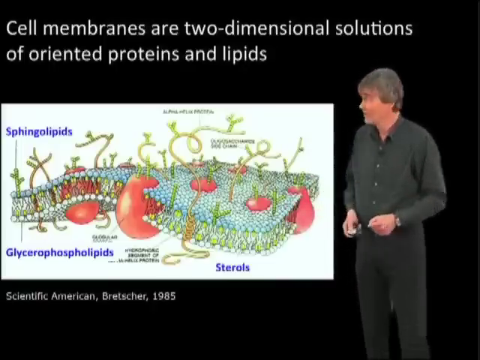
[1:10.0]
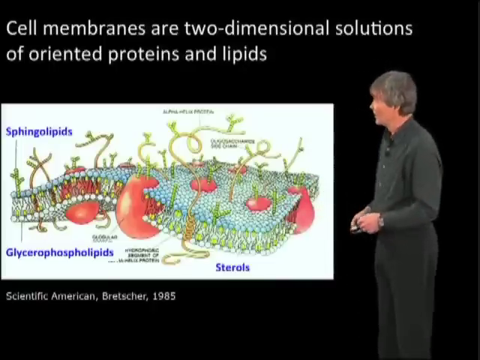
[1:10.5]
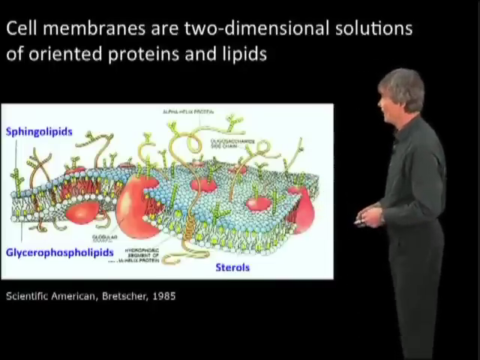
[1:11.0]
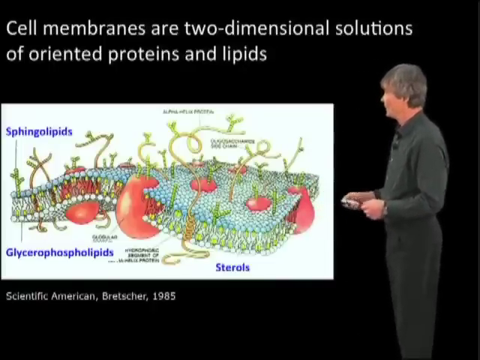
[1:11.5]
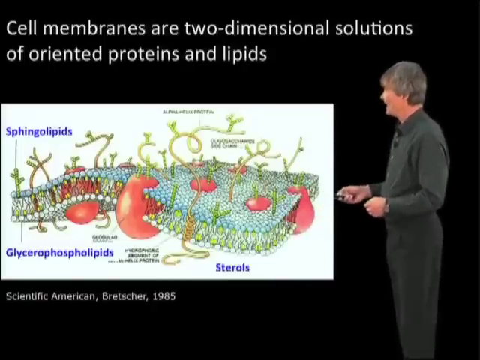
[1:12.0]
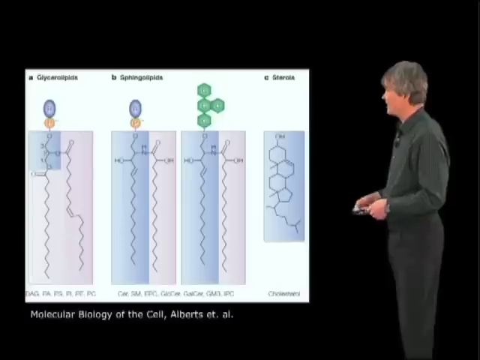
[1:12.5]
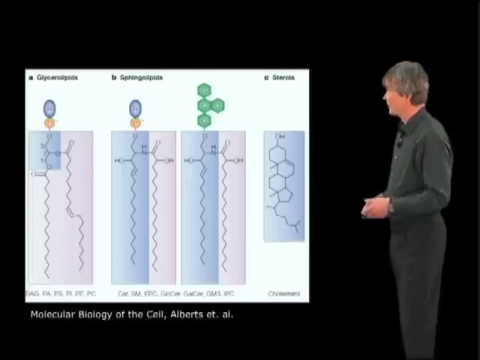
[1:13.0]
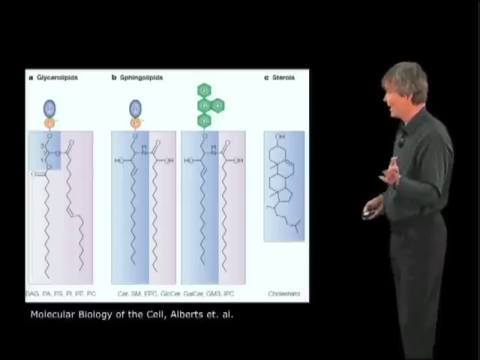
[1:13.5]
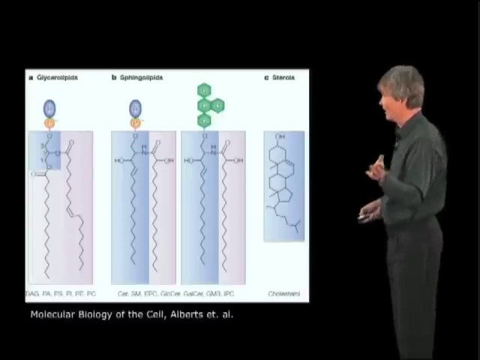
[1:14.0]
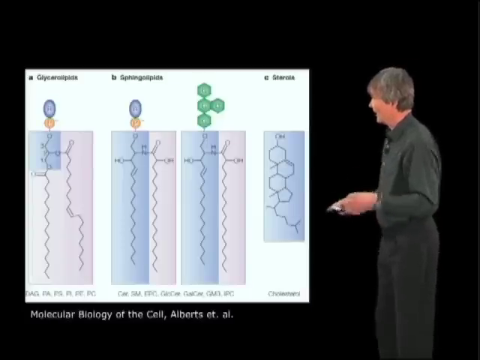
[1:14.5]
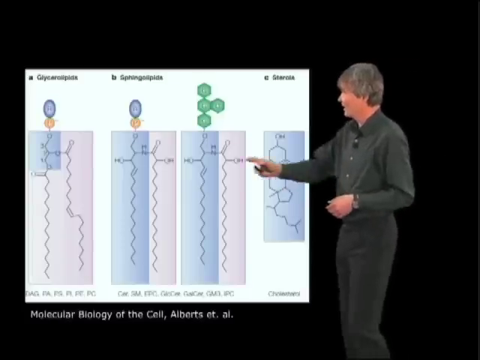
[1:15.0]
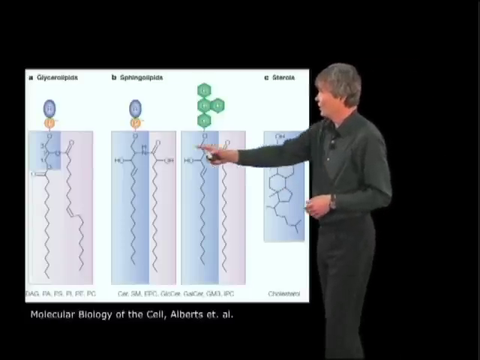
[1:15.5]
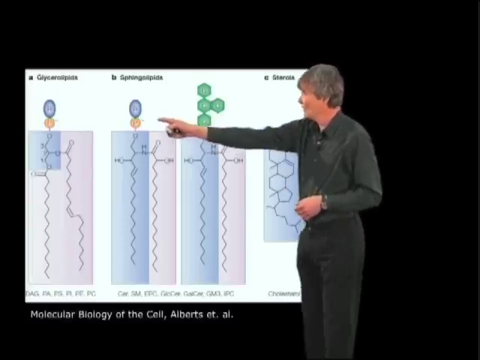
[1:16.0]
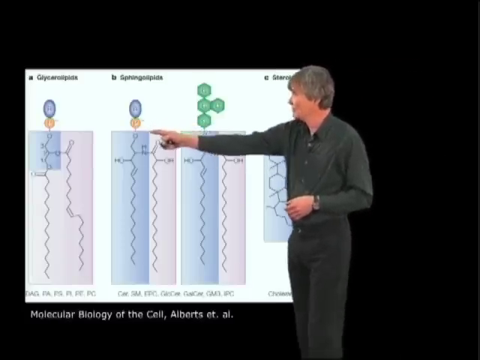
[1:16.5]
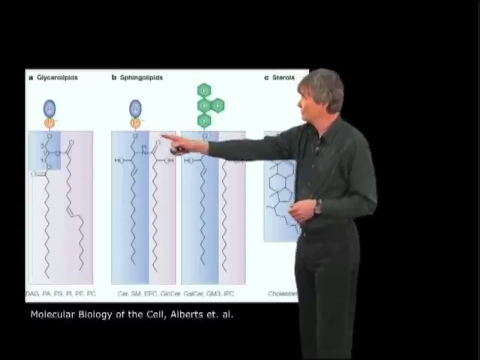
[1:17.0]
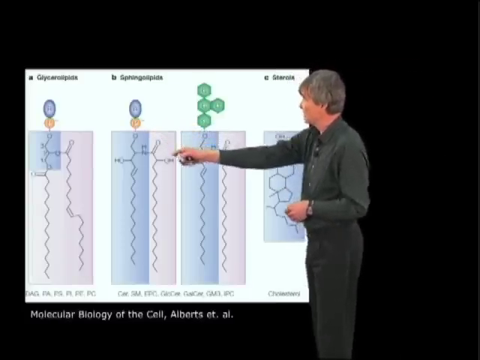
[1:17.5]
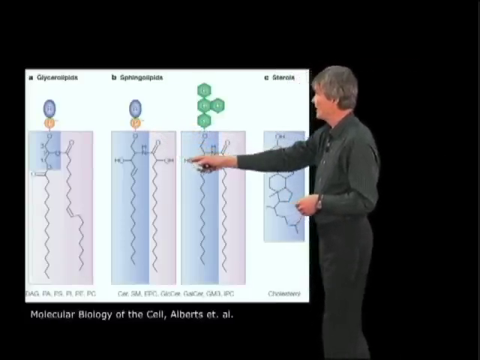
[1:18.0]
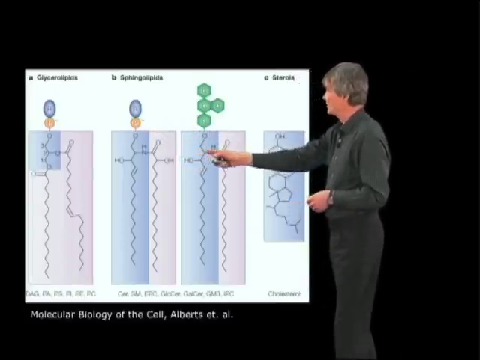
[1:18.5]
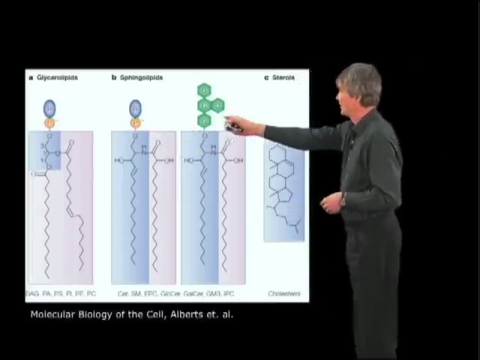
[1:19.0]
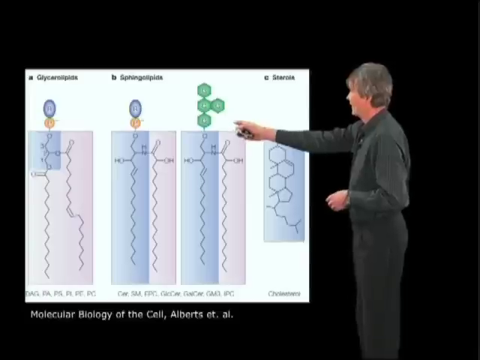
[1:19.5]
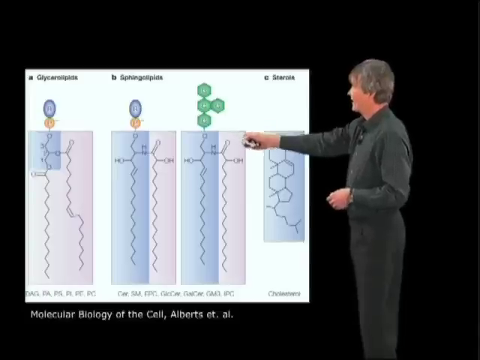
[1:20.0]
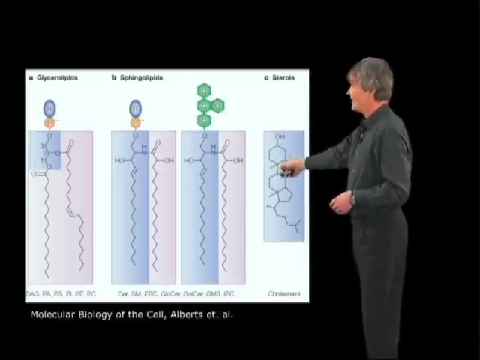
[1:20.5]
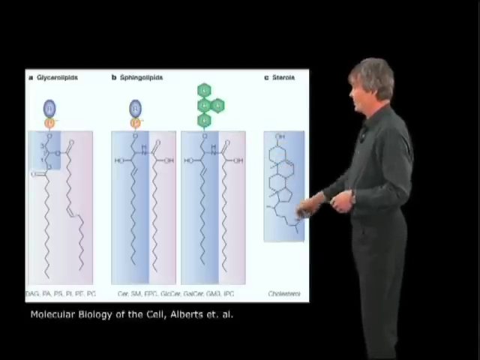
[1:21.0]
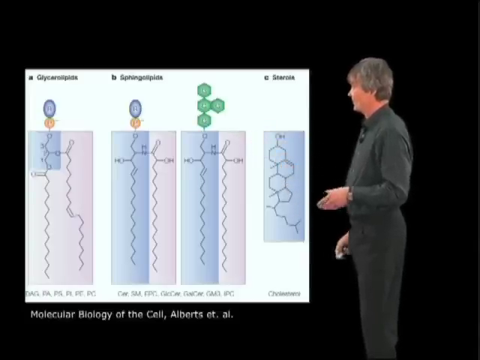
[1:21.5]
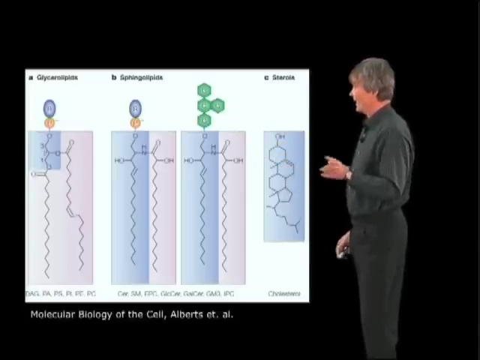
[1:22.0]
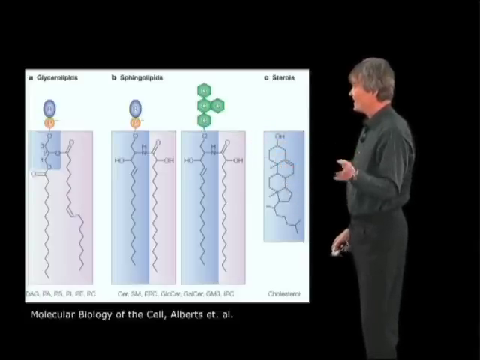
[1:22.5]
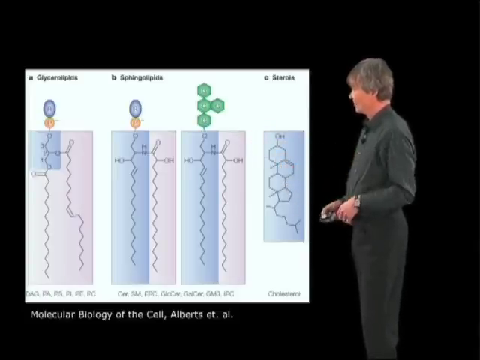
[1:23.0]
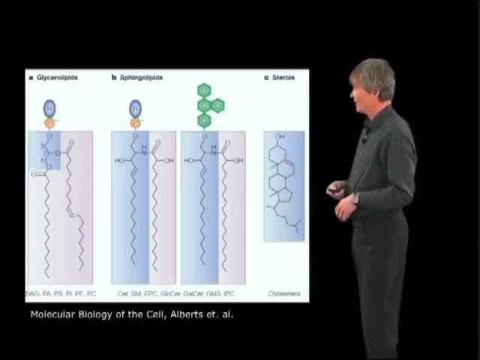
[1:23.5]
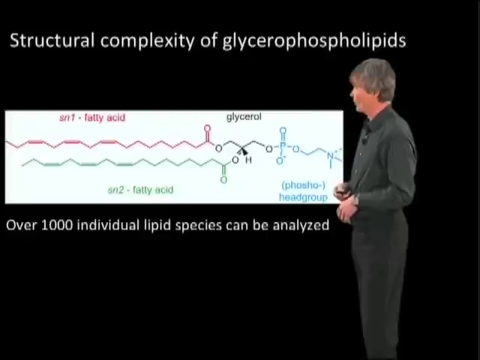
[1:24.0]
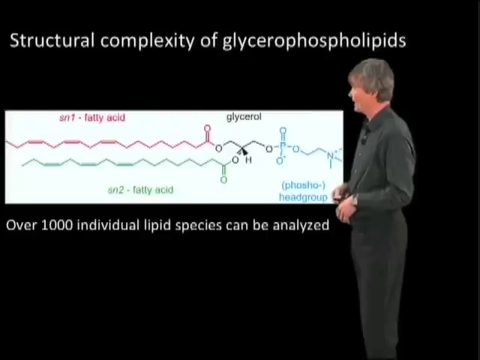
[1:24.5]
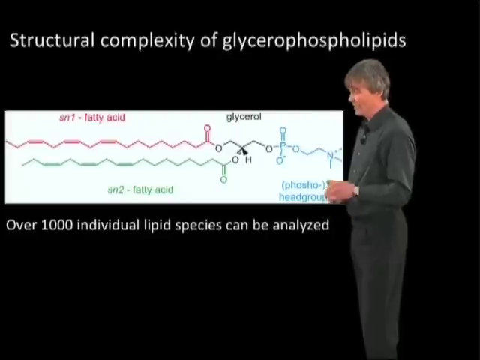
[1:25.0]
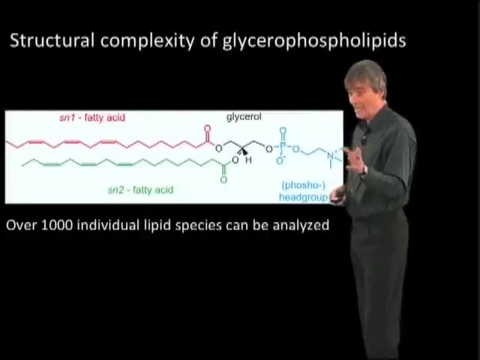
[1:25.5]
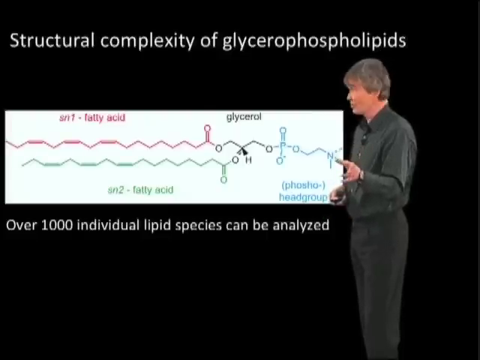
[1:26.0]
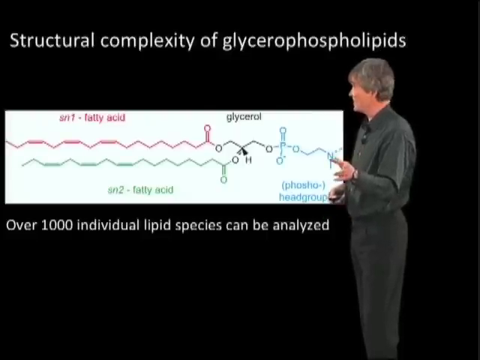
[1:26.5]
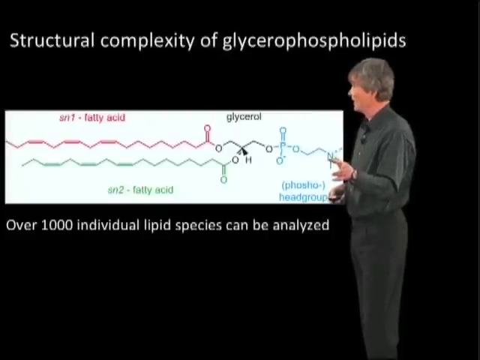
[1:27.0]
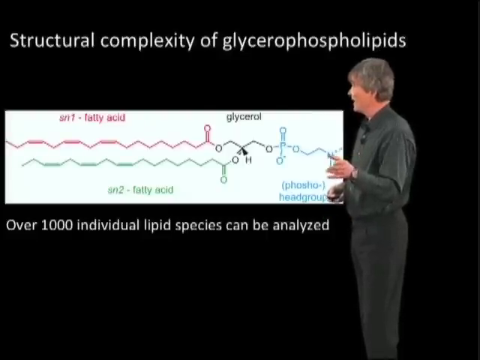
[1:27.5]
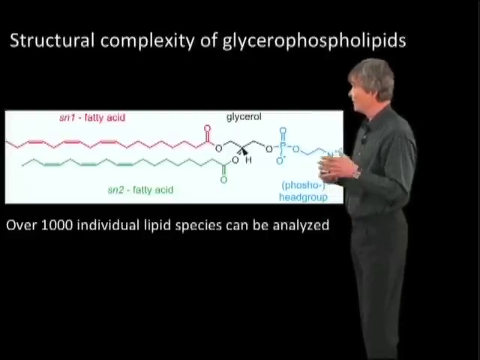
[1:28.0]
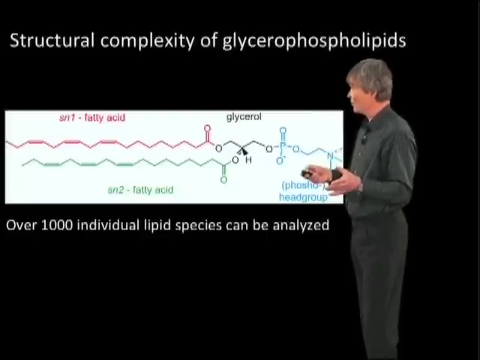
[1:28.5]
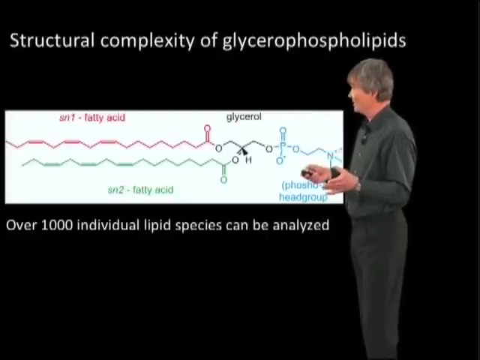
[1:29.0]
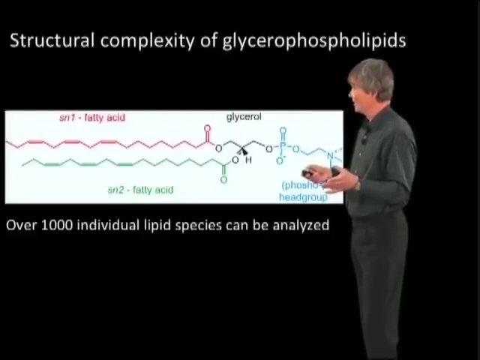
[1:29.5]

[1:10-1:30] The slide behind the instructor changes to skeletal structures of glycerol lipids, sphingolipids and sterols, from molecular biology of the cell. The diagrams are 2D rather than 3D, drawn with lines, and there are four in total: the first, on the left, is glycerol lipids, with a polar head and a tail sketched in crooked lines; sphingolipids have two versions; and sterols, labeled C, are at the end. He points at the first sphingolipid structure, then the second, and then the sterols. He then uses his clicker to show another 2D diagram, focusing on the structural complexity of glycerophospholipids.